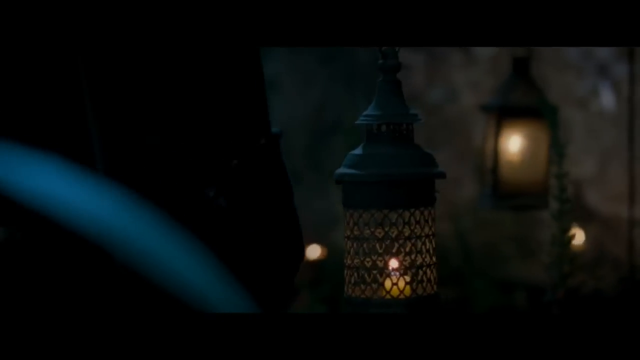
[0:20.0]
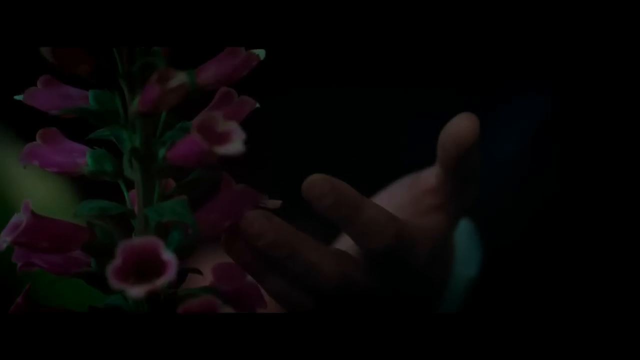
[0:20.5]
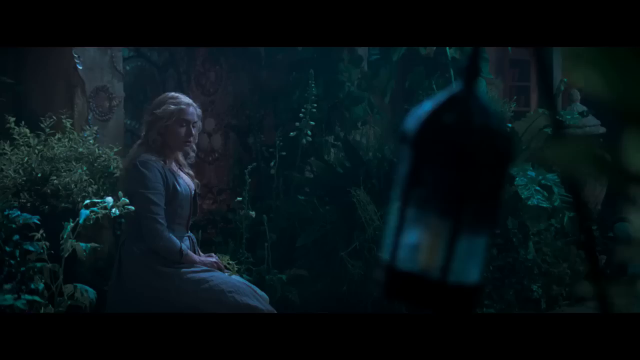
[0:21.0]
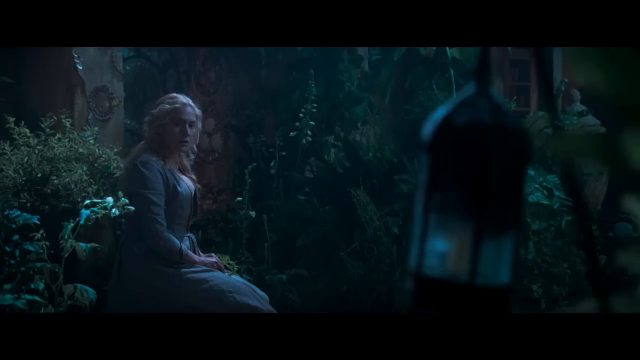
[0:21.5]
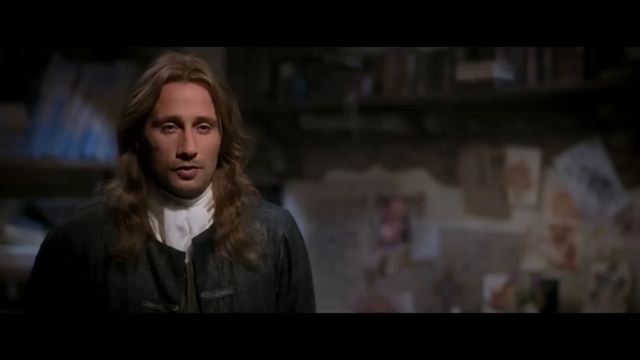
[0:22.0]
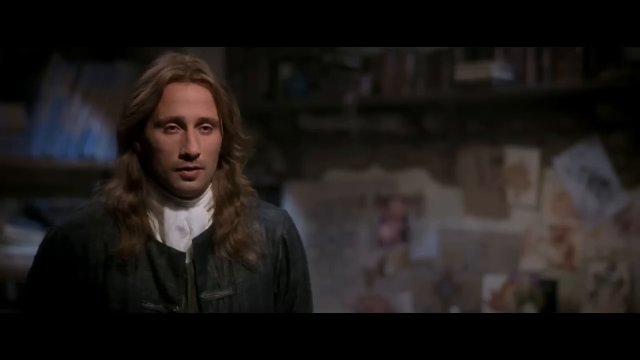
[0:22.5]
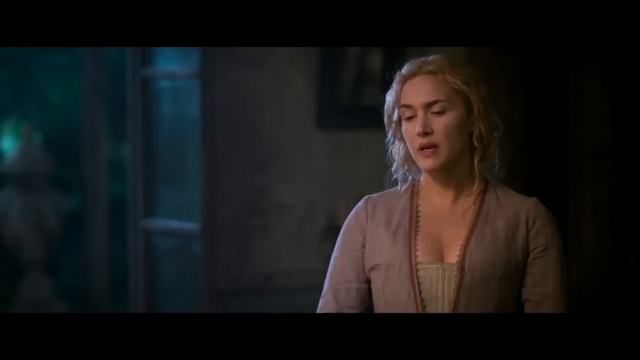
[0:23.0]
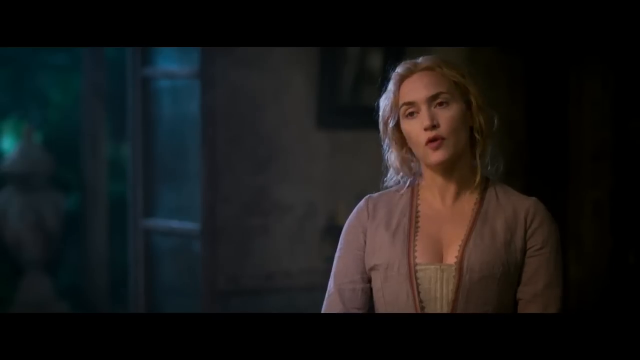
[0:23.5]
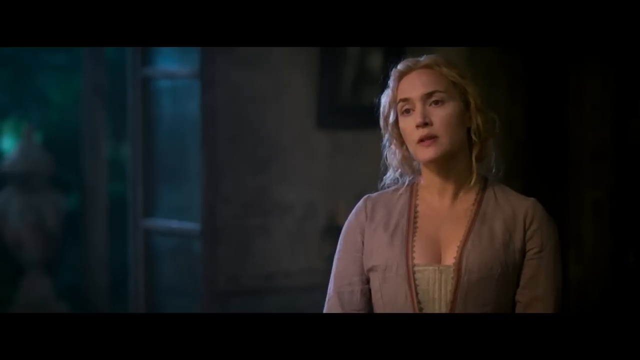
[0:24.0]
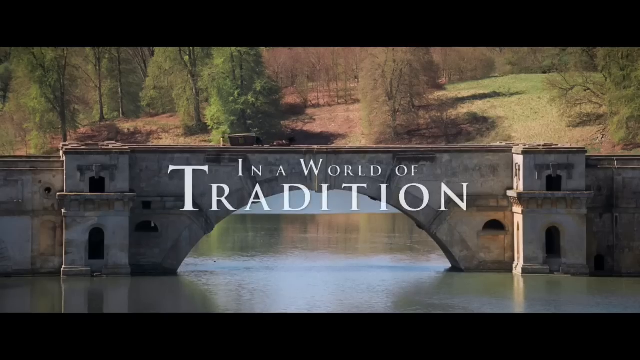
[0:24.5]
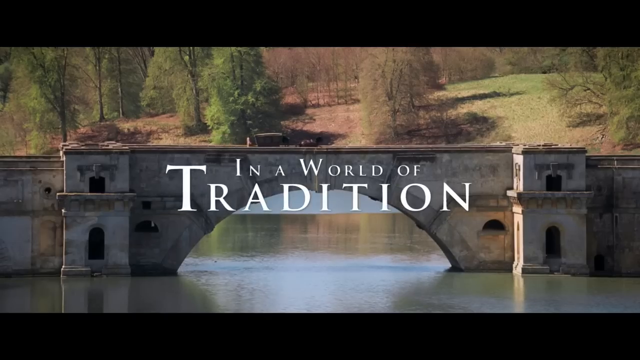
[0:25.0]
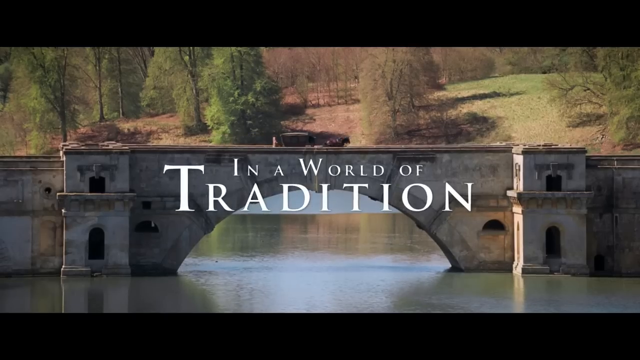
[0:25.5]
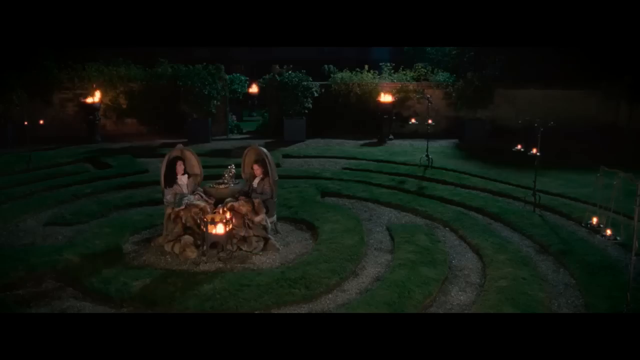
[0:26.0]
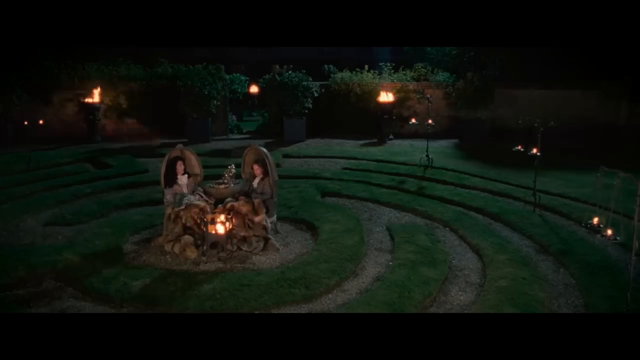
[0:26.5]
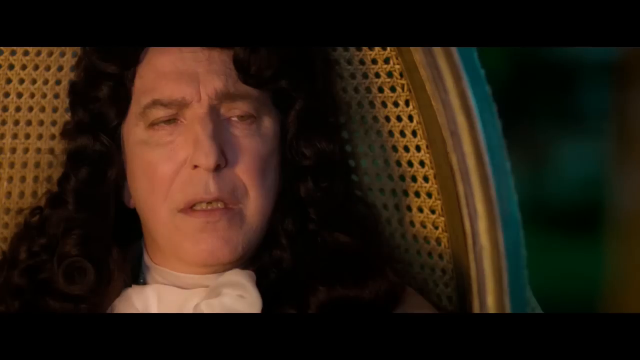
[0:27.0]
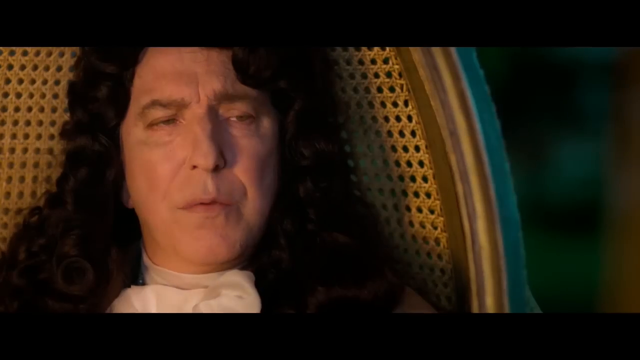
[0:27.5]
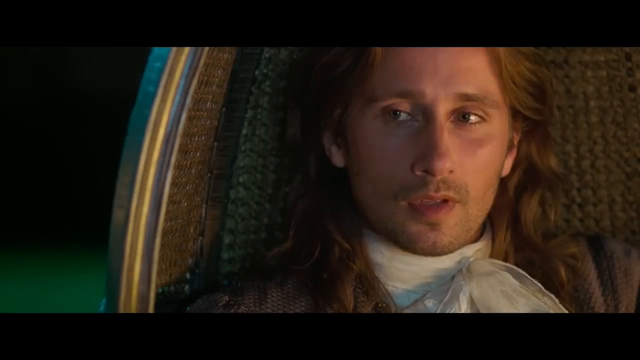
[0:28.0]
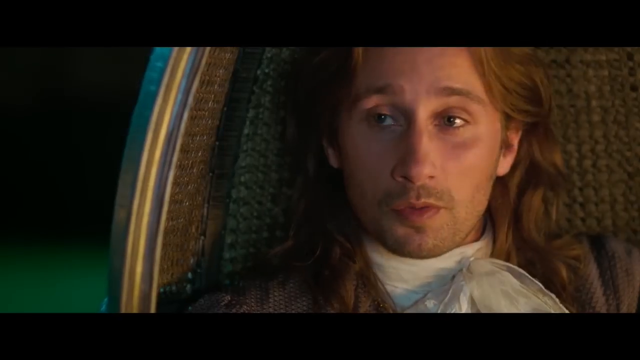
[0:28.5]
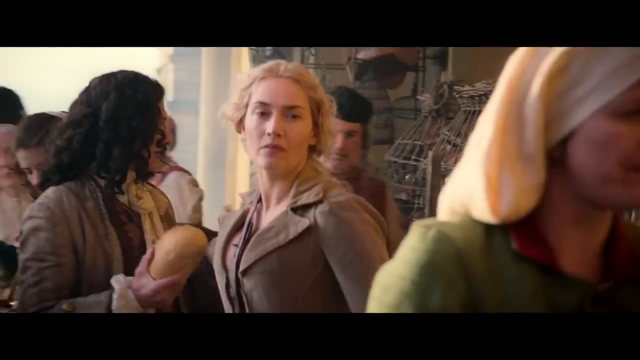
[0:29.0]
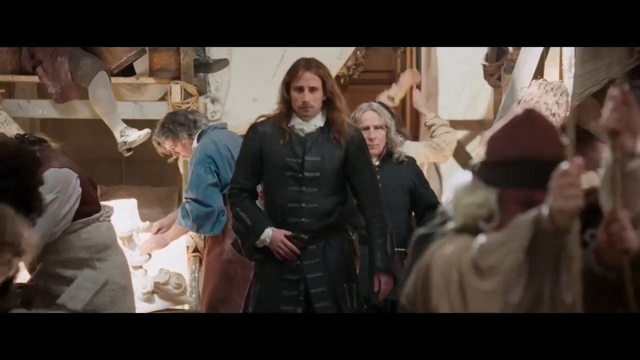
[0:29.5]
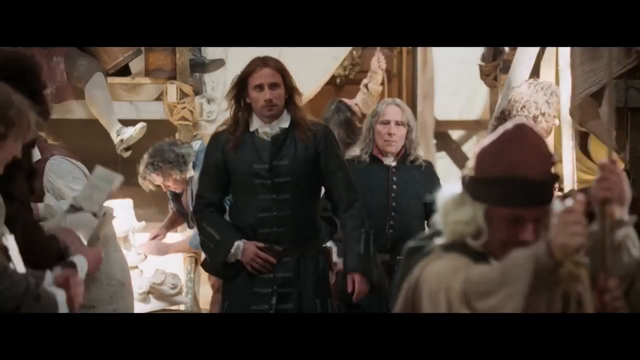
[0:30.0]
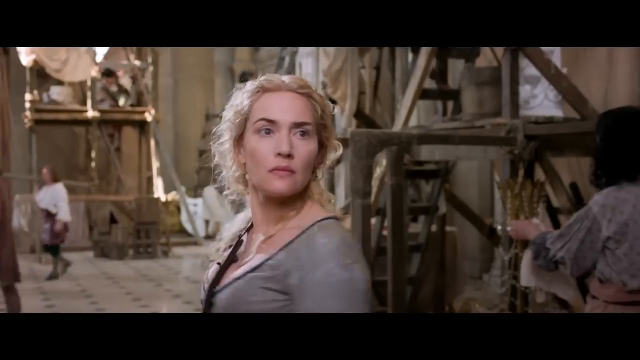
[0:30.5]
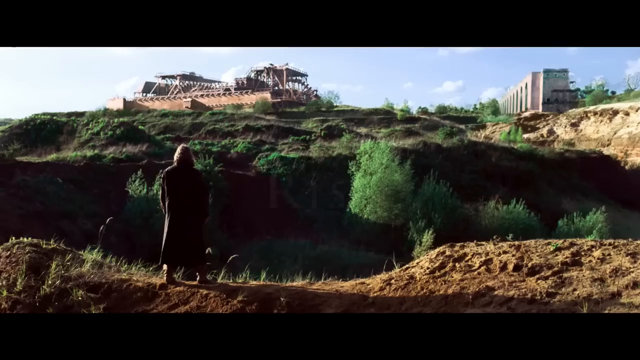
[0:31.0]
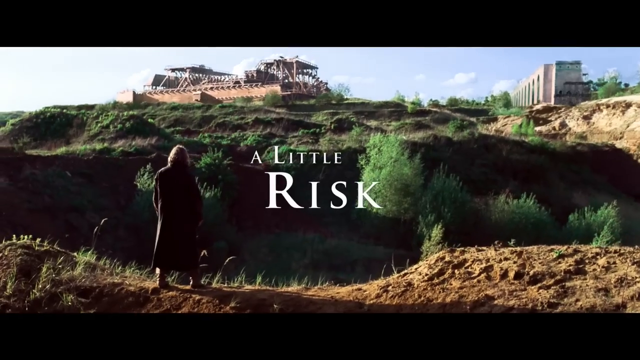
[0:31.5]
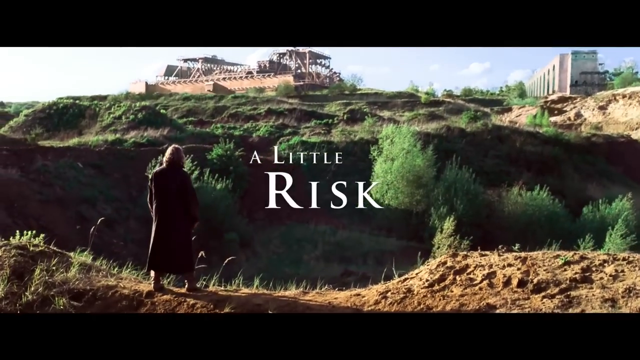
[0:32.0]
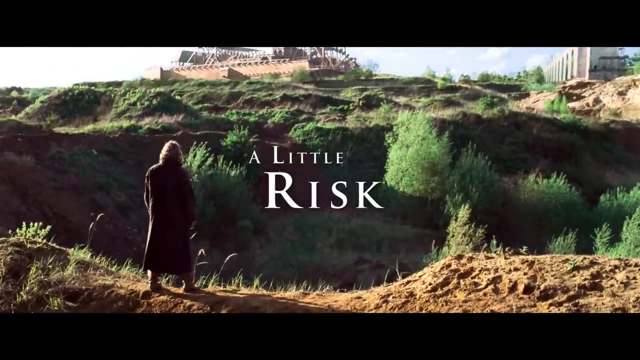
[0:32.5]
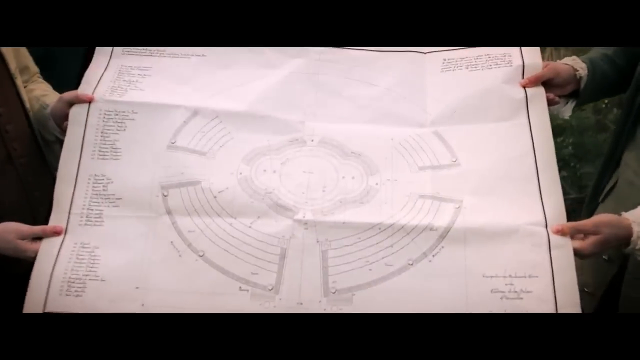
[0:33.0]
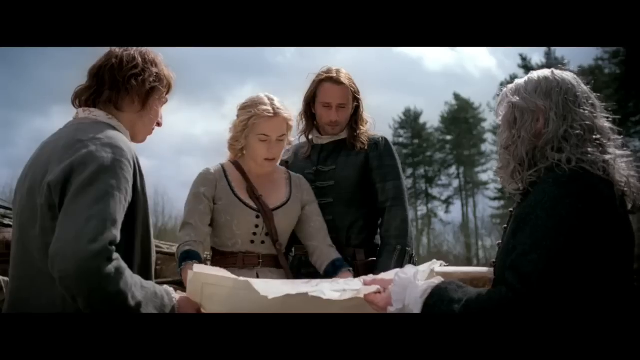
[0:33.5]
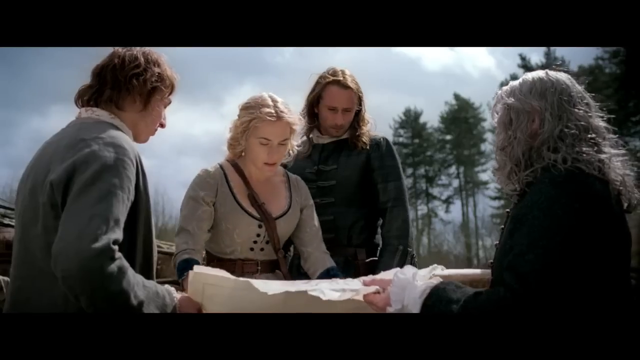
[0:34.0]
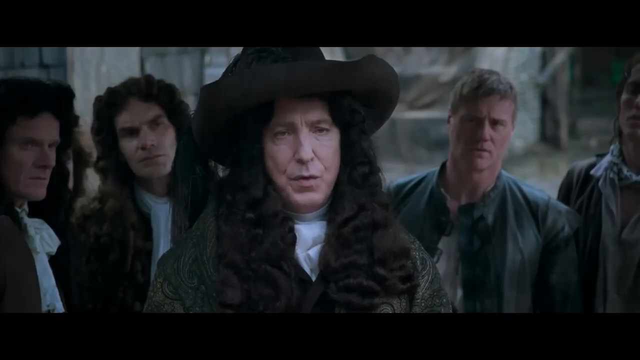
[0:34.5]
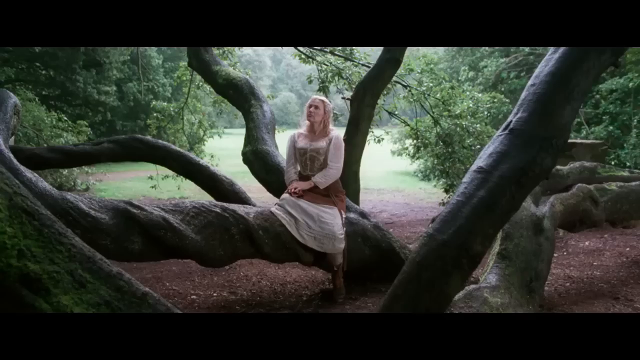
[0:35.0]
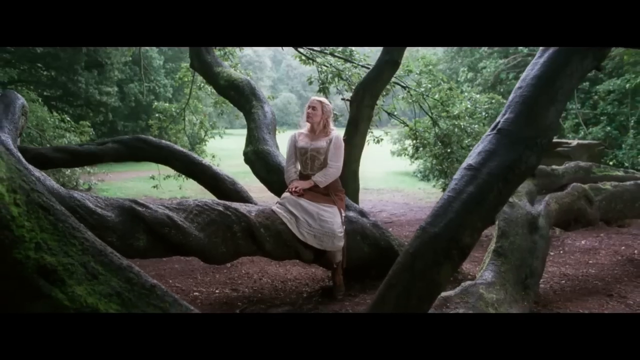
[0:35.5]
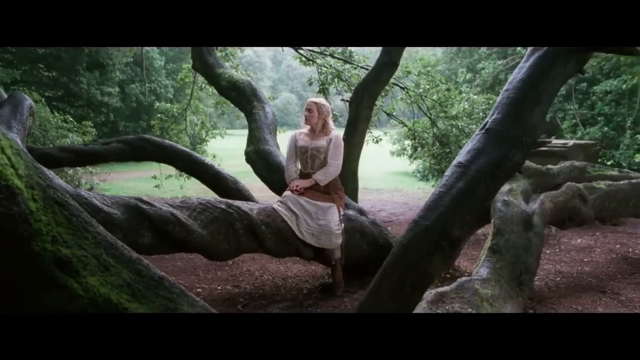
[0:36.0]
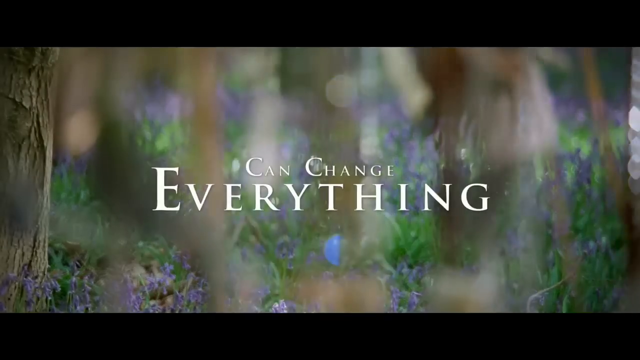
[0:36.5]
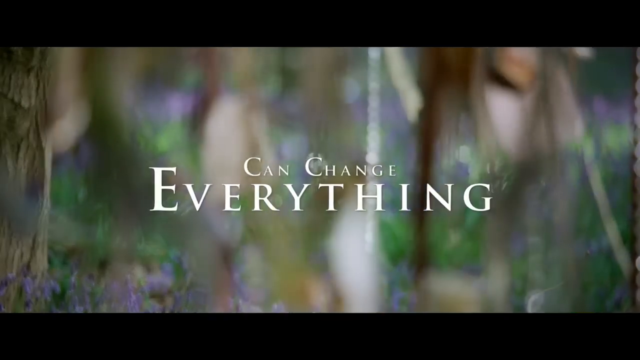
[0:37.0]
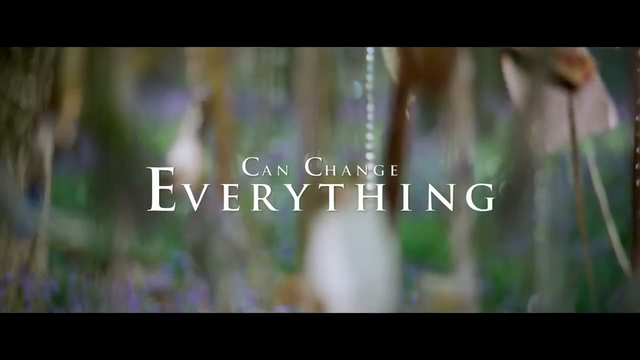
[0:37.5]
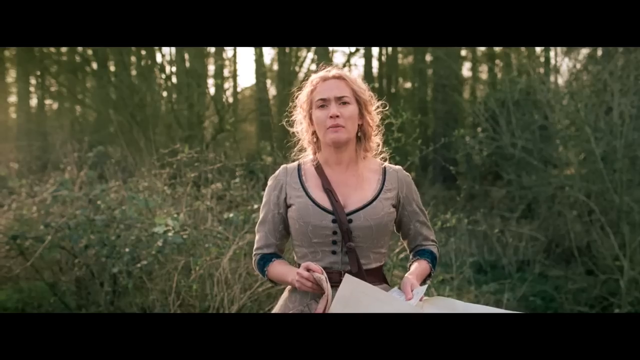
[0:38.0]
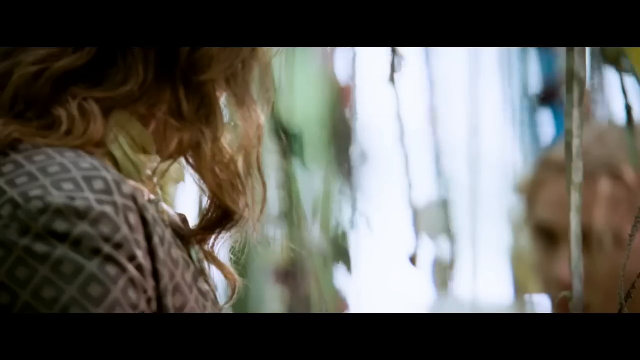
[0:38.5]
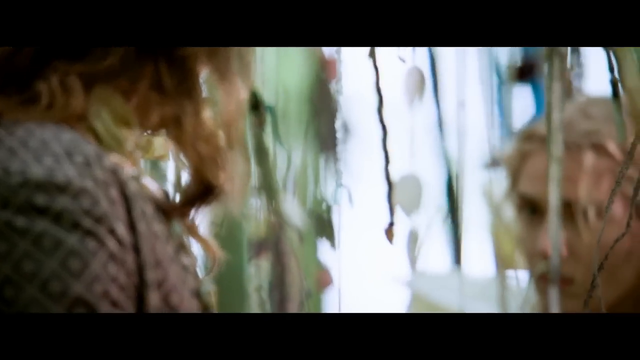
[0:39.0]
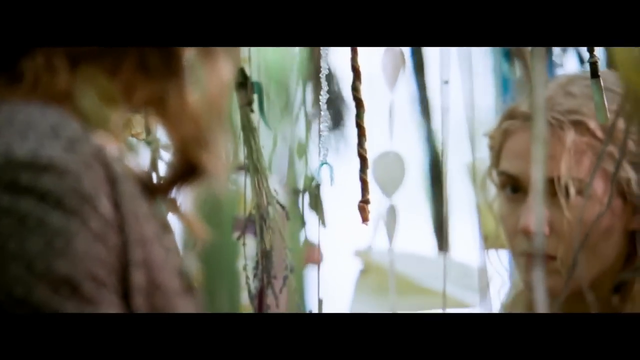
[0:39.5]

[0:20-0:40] People appear to be getting prepared for a wedding day. Some of them bow down as the king walks by with the royal family. A horse carriage carries what looks like a tree, and about six people are there. Someone helps a lady dress for a special occasion, possibly a wedding of some sort. A man wearing a wig like those used by judges seems to be loving the moment. A huge building with many windows appears, colored maroonish with a bit of cream, with a brownish roof that looks old. In another scene, a brown horse pulls a carriage while one man manages the horse, travelling on a pavement that looks nice and modern.